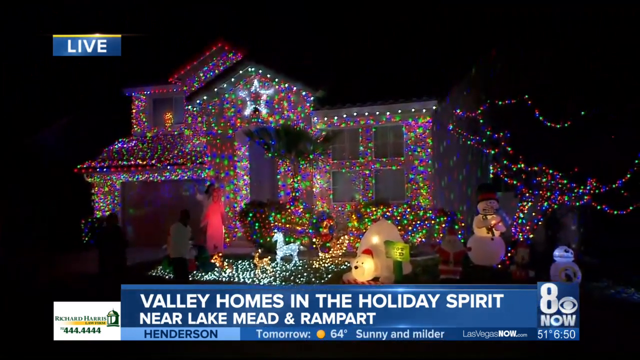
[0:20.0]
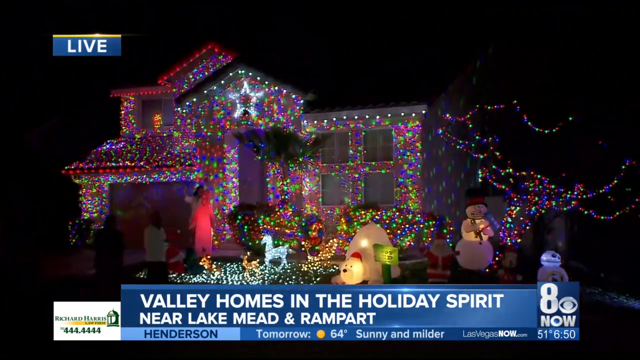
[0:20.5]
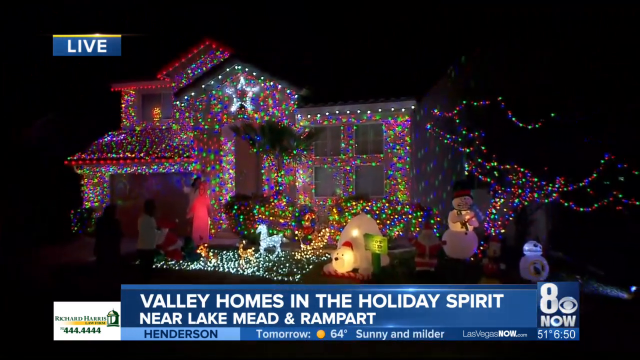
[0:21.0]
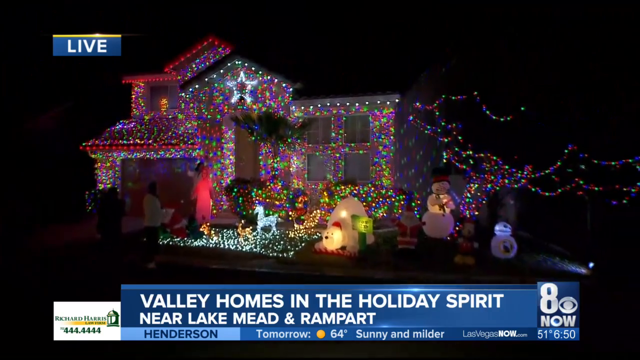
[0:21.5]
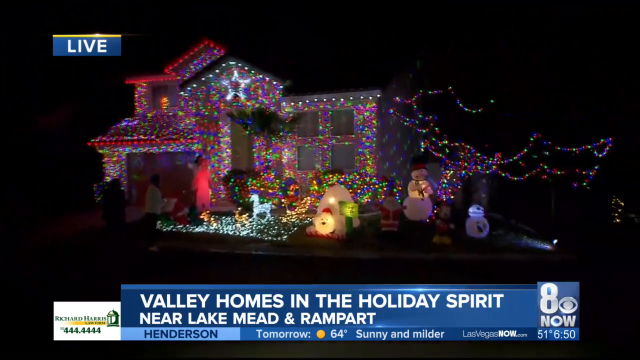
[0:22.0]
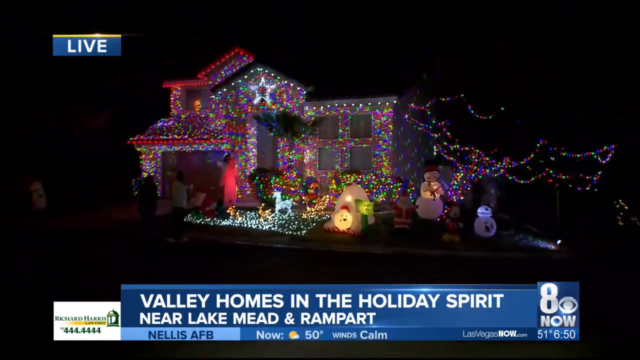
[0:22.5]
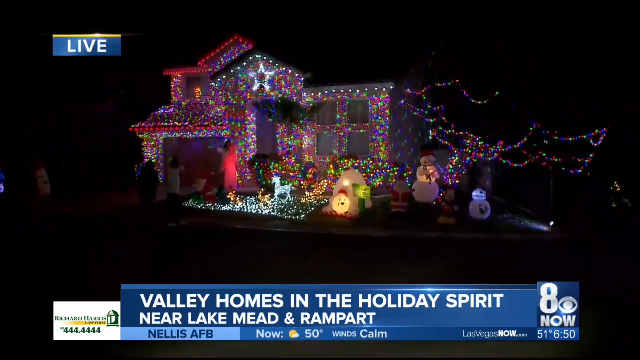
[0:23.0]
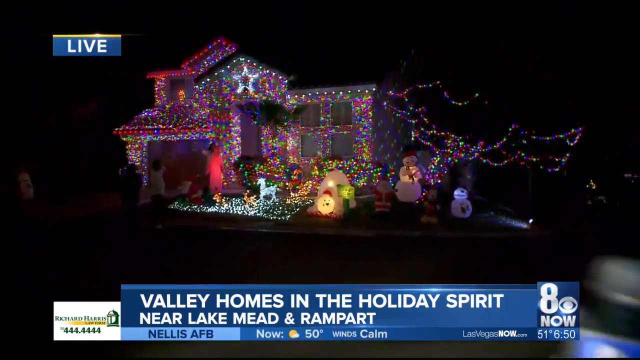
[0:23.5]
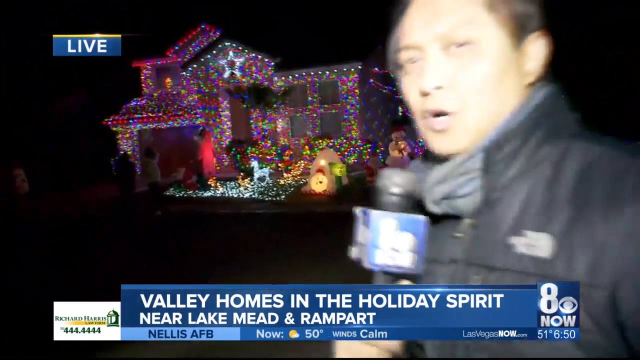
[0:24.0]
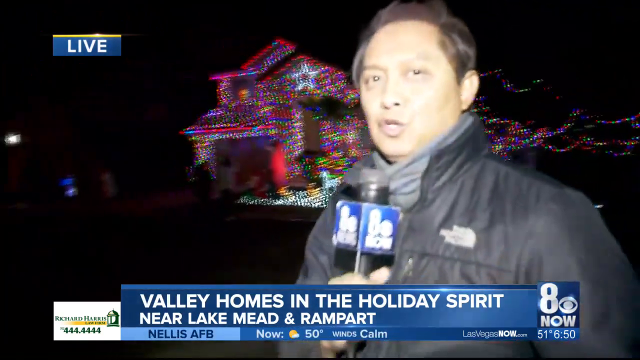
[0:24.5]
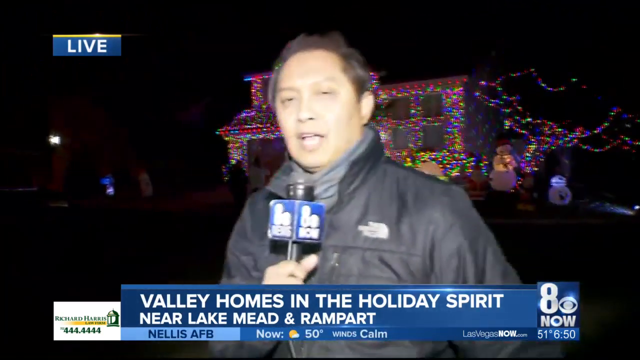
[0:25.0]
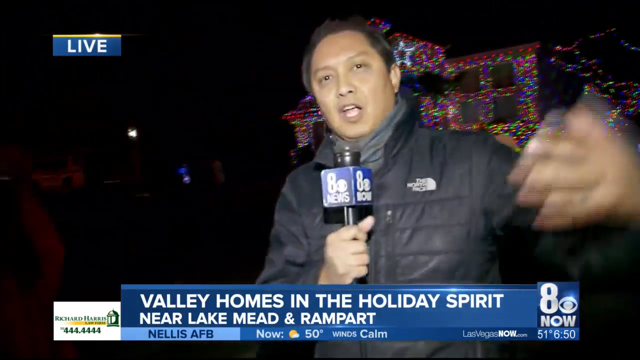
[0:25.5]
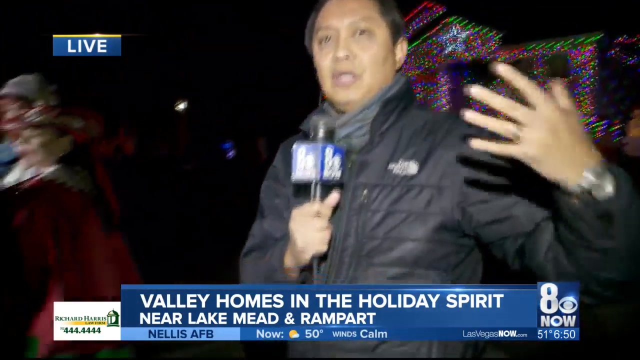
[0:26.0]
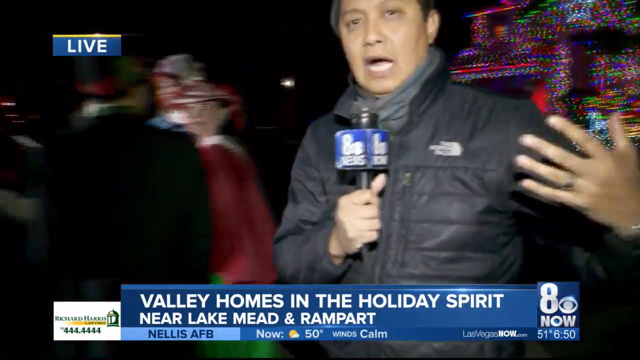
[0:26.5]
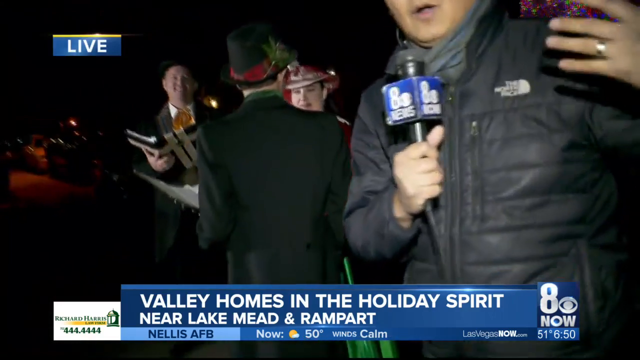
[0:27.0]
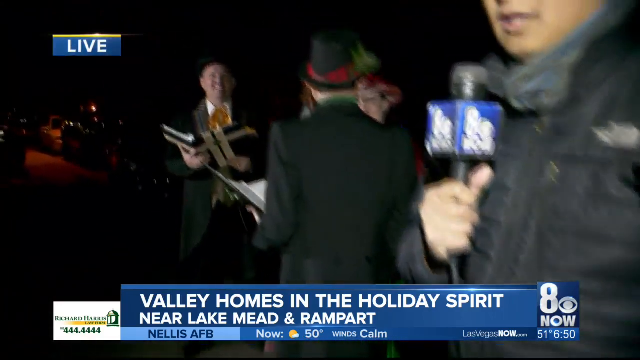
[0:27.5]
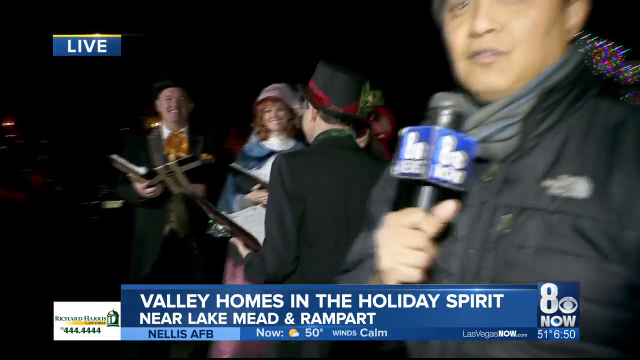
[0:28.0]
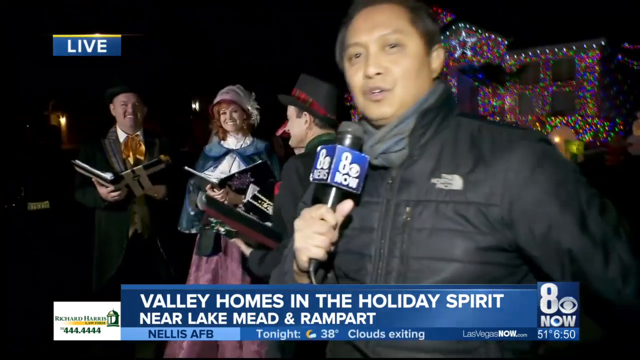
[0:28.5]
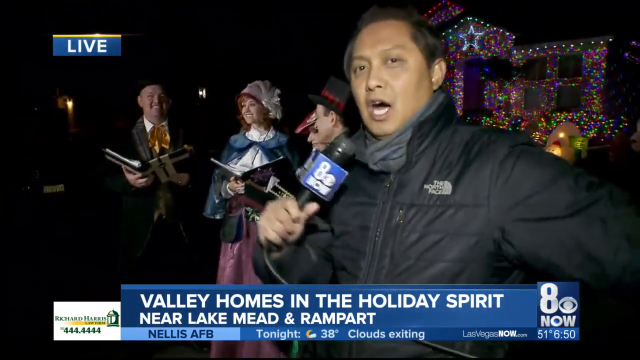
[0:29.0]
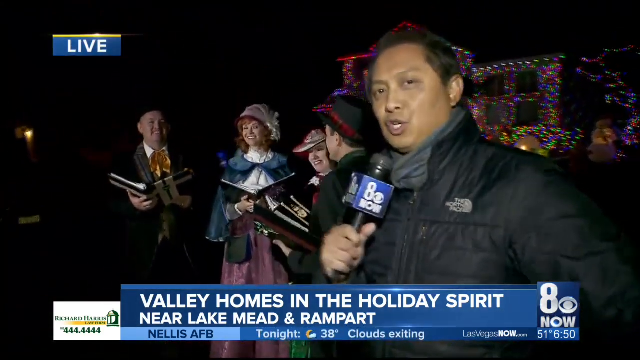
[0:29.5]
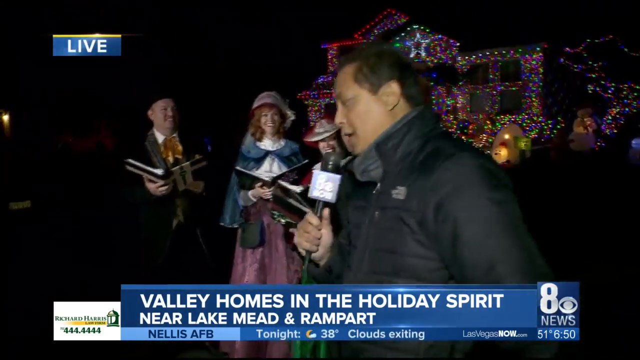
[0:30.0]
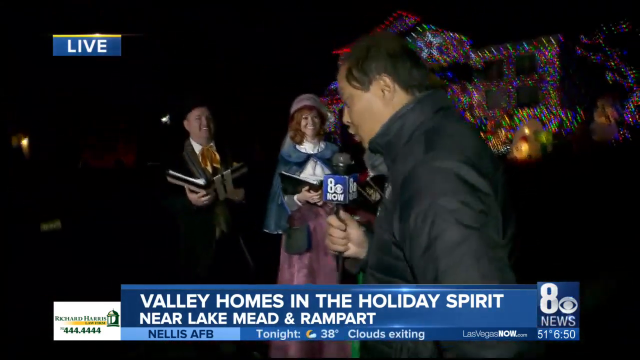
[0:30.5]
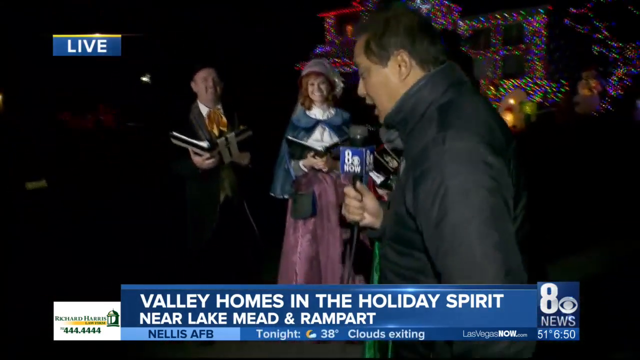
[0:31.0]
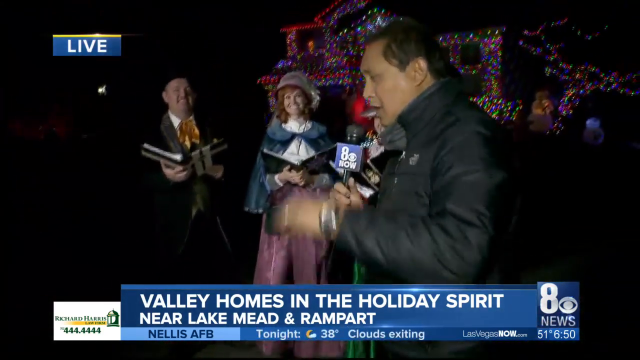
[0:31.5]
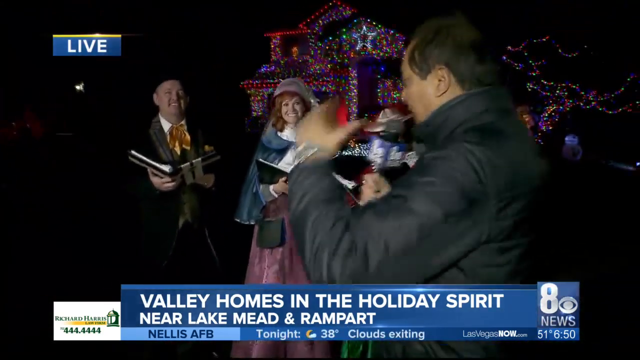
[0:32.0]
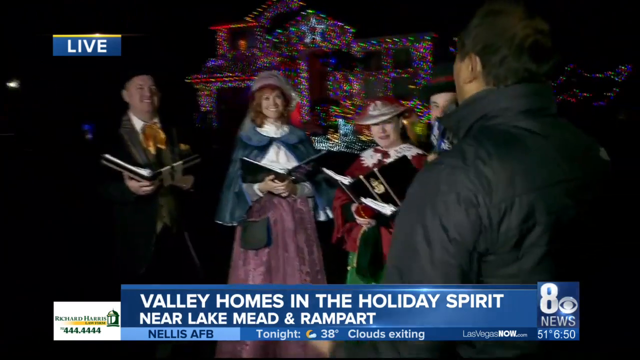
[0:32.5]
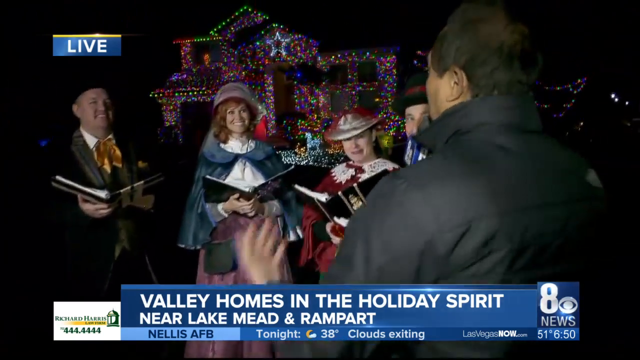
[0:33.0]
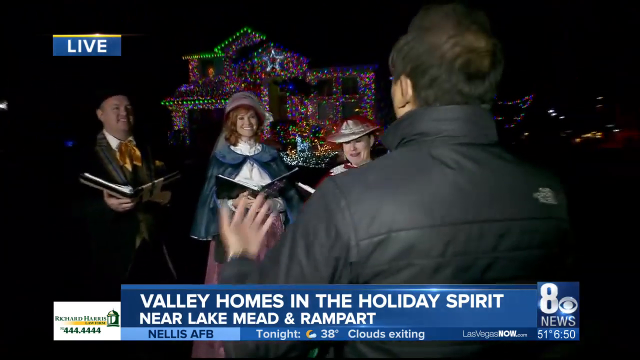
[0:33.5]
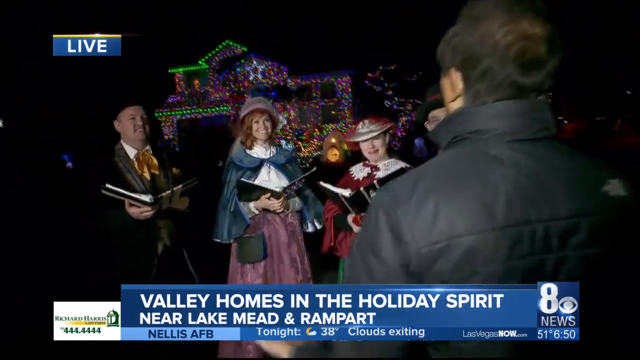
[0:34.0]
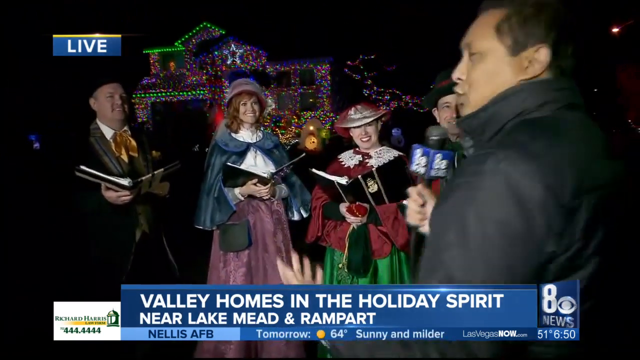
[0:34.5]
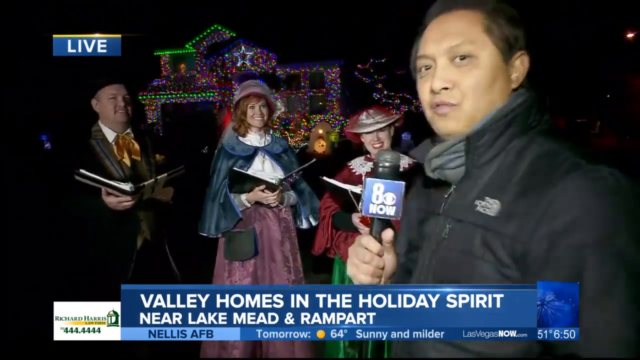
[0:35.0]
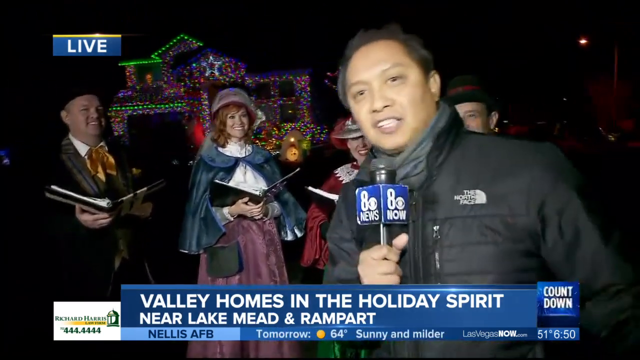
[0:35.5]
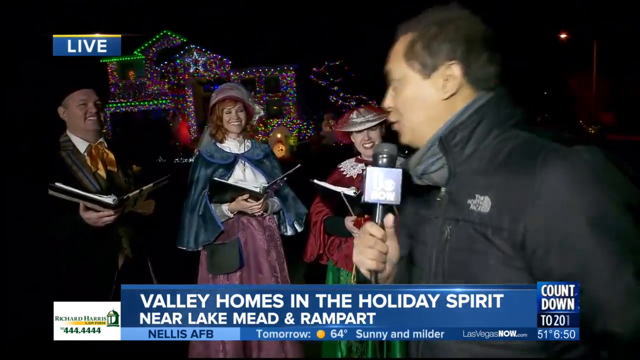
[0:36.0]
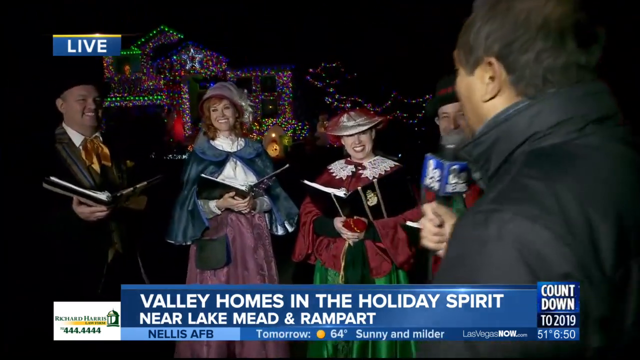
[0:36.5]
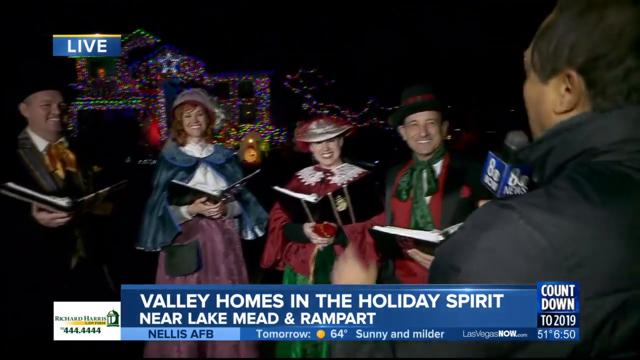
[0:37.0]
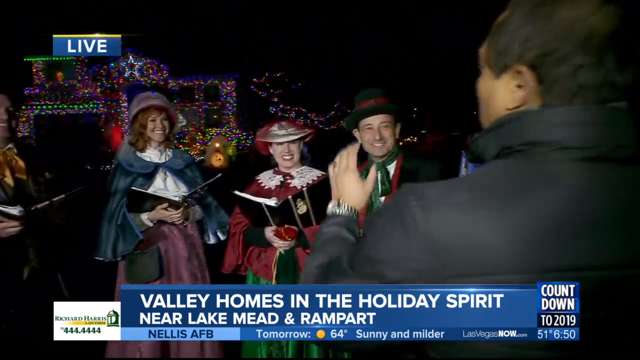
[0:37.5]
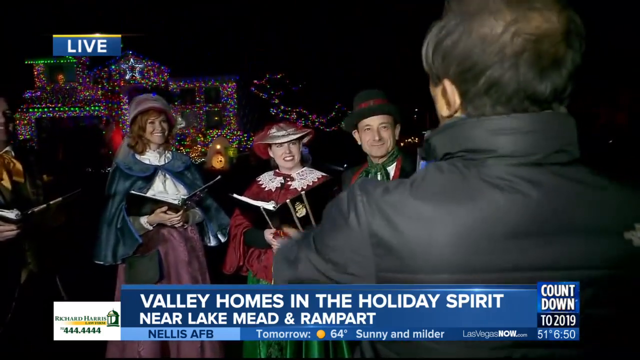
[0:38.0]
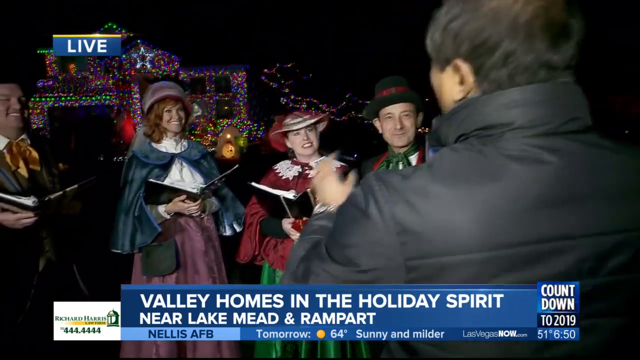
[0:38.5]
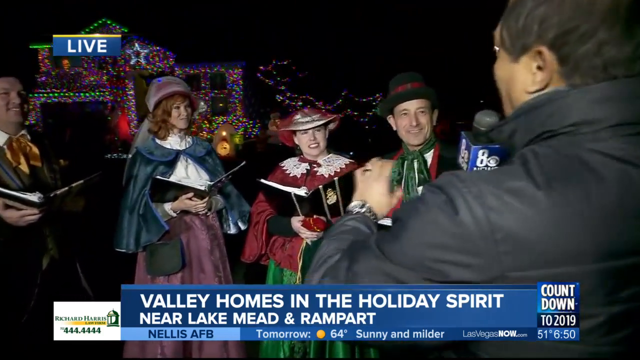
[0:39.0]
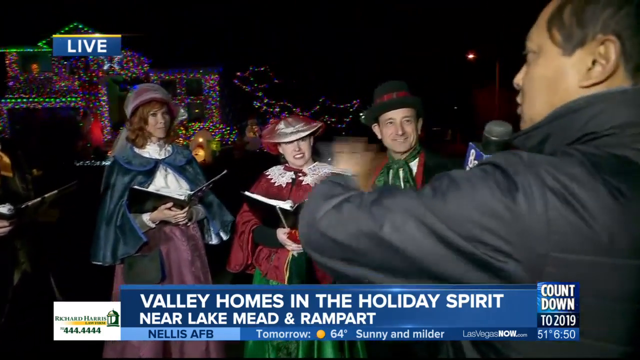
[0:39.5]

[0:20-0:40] The camera continues to focus on the house. Against the dark night sky there are snowman figures, reindeer and all sorts of other animals and lights outside. Everything is extremely bright and twinkly, and the decorations are quite traditional. The camera begins to zoom out, and the presenter steps back into the shot from the right side of the frame. He walks towards the left of the frame, revealing a group of carol singers standing outside the house. They are dressed in traditional costumes, hold hymn books and smile very widely, looking very happy. The presenter walks over and turns to them, and it becomes clear he is going to interview them. They are not singing, just smiling, looking at him and waiting to speak. The reporter turns toward them so that his back faces the camera.